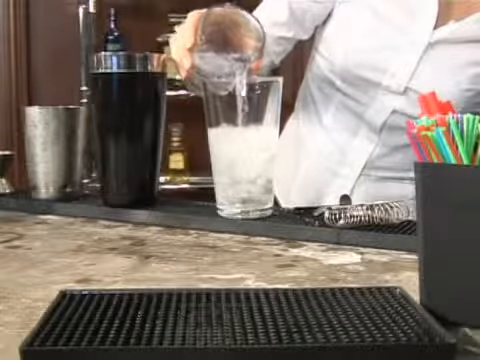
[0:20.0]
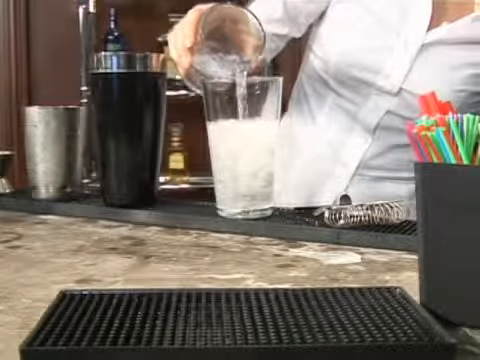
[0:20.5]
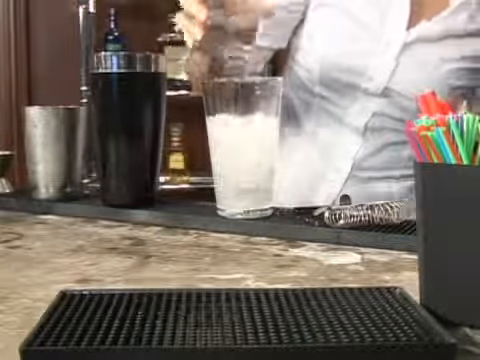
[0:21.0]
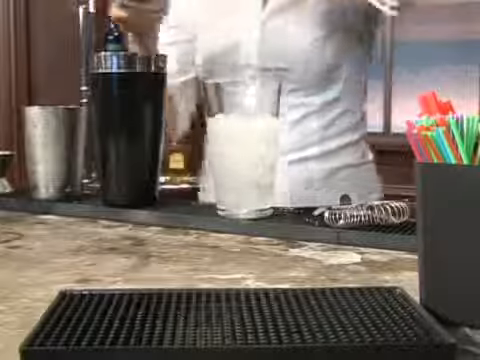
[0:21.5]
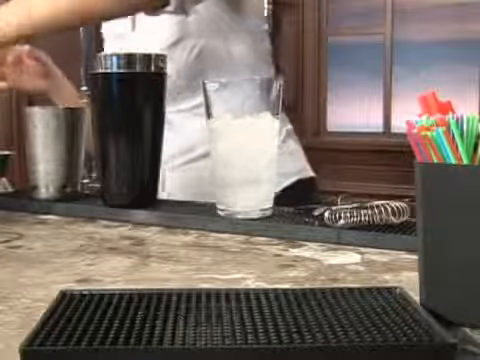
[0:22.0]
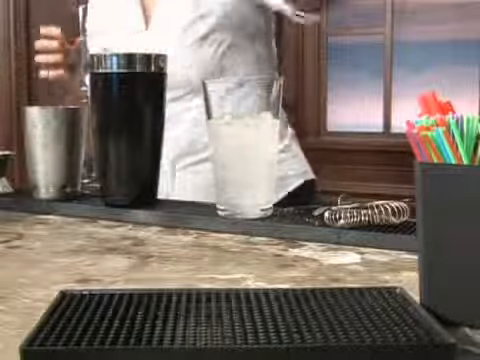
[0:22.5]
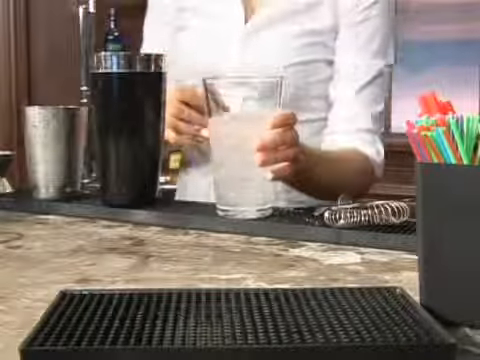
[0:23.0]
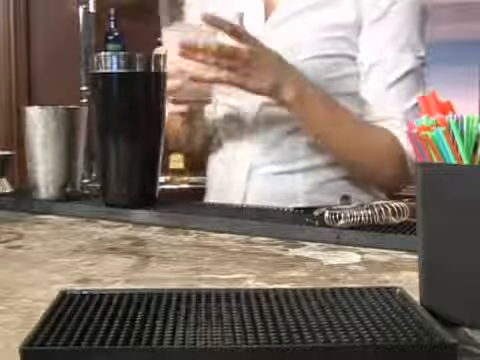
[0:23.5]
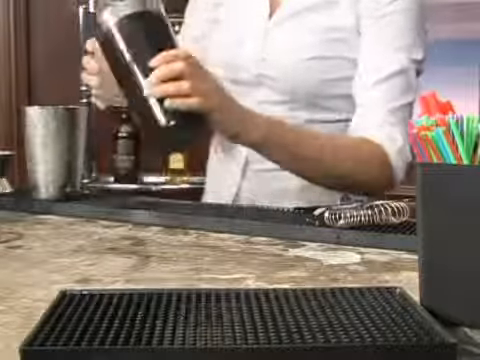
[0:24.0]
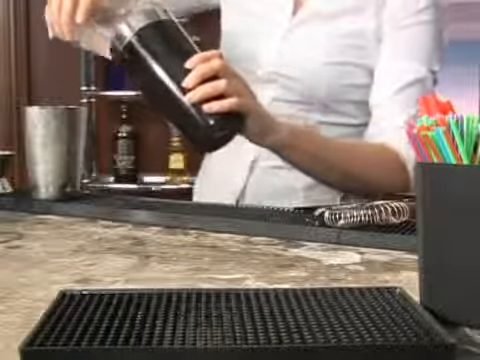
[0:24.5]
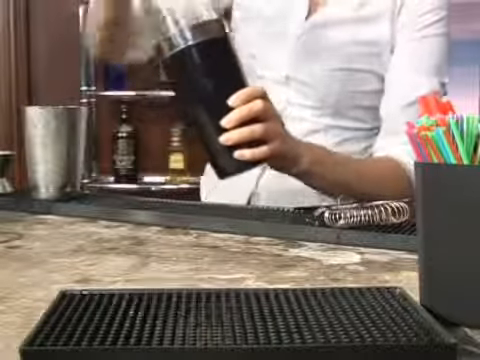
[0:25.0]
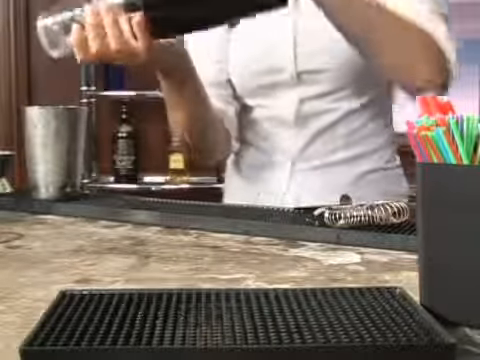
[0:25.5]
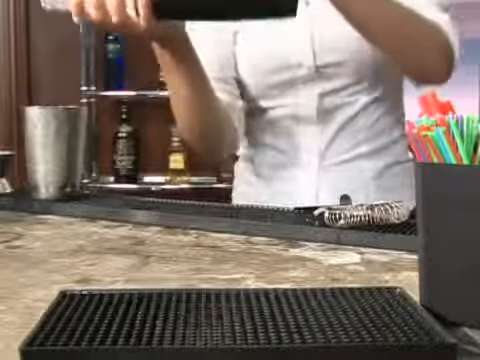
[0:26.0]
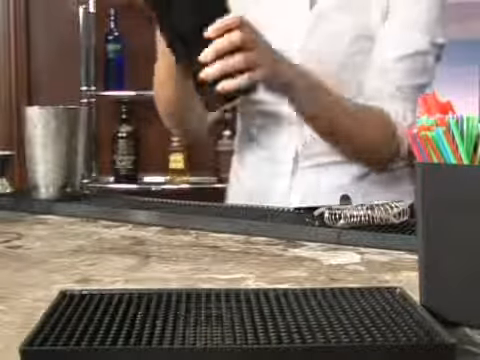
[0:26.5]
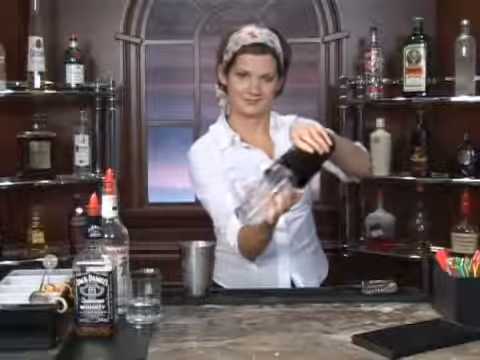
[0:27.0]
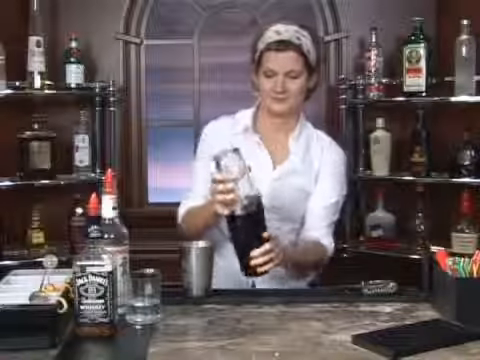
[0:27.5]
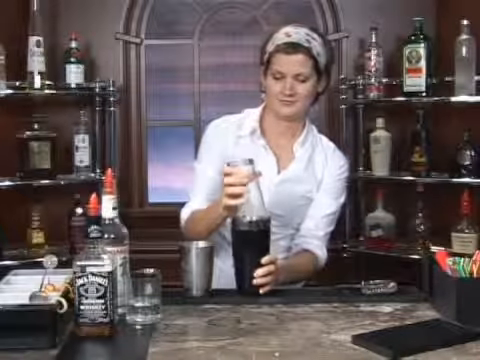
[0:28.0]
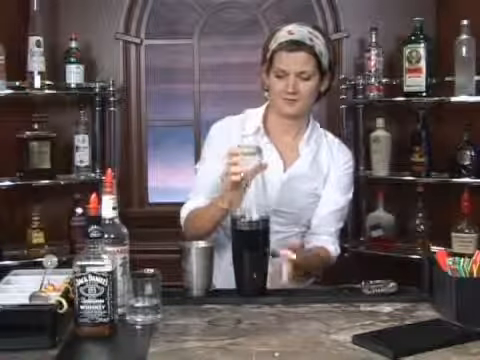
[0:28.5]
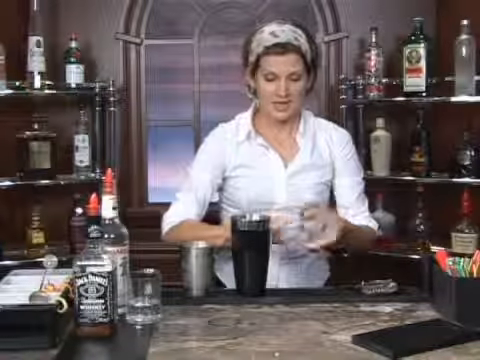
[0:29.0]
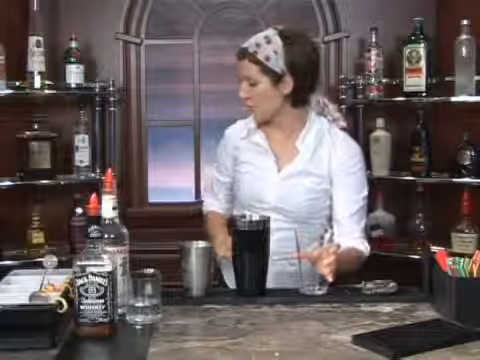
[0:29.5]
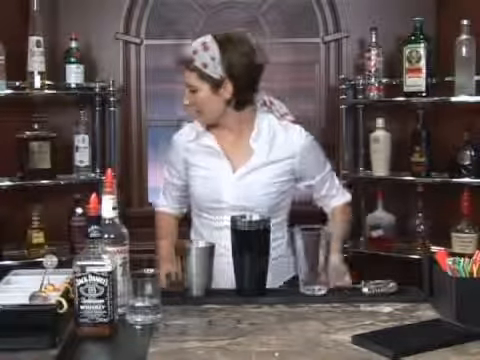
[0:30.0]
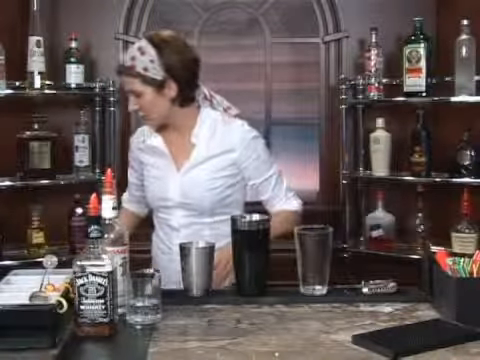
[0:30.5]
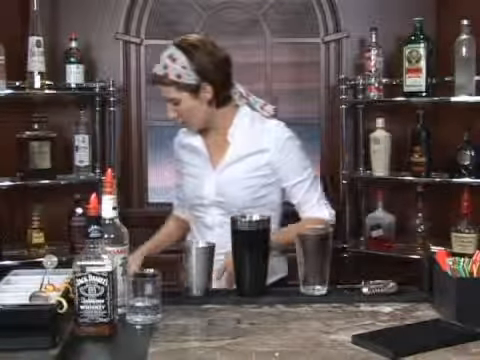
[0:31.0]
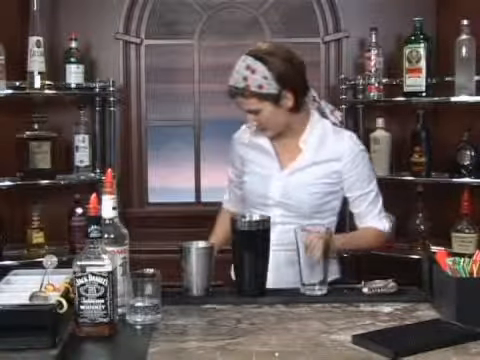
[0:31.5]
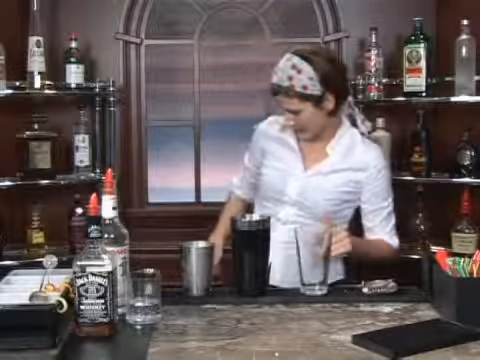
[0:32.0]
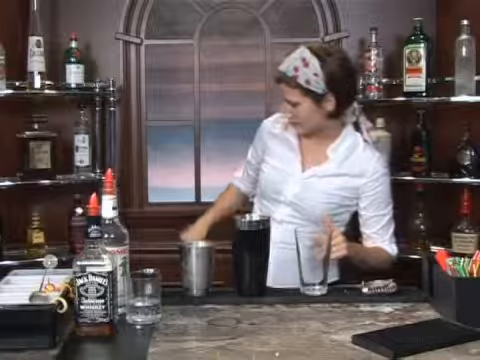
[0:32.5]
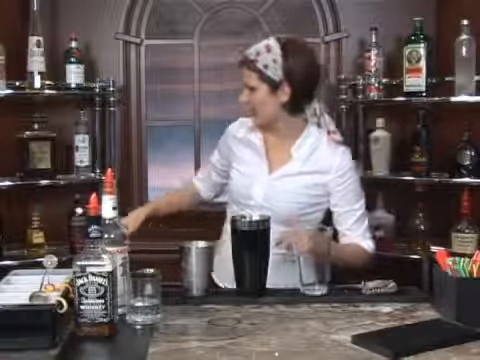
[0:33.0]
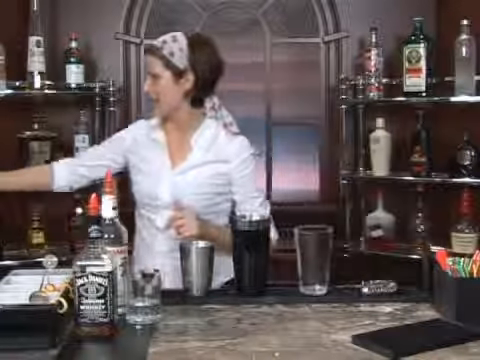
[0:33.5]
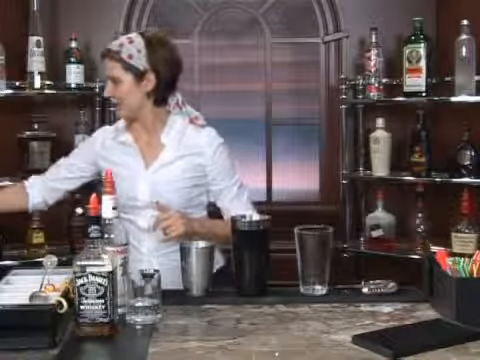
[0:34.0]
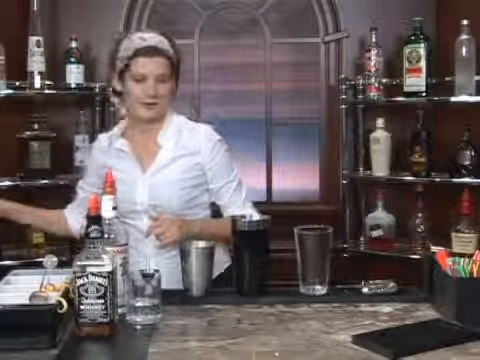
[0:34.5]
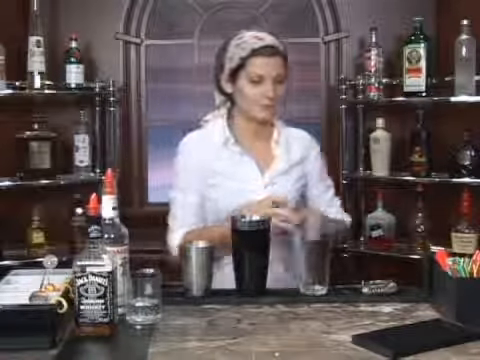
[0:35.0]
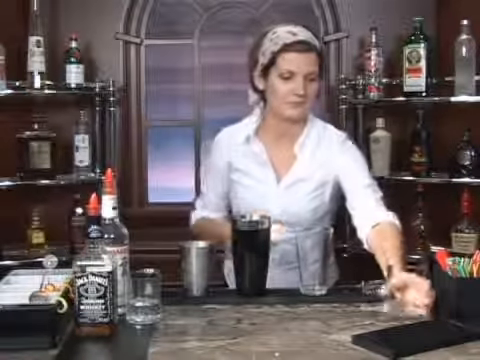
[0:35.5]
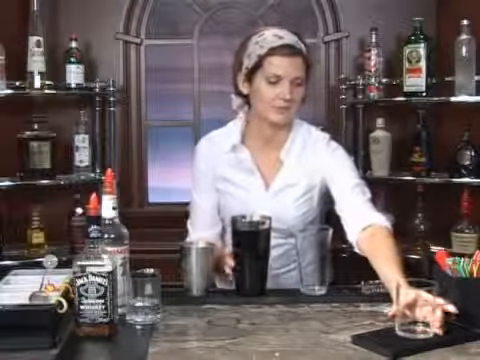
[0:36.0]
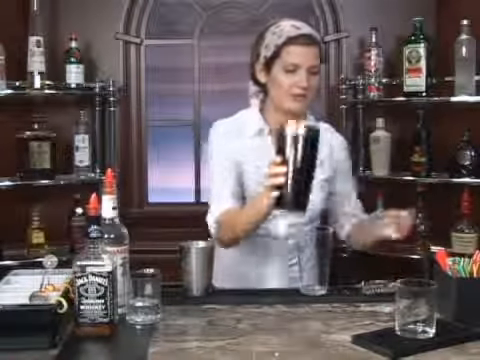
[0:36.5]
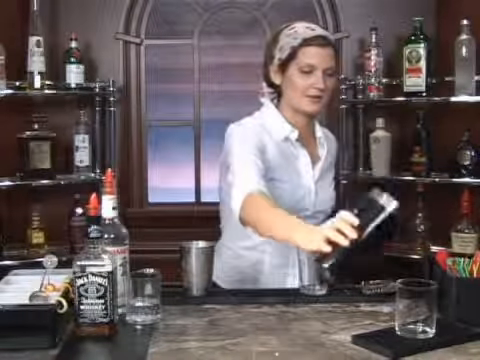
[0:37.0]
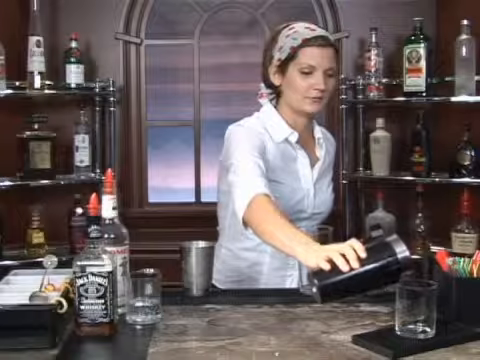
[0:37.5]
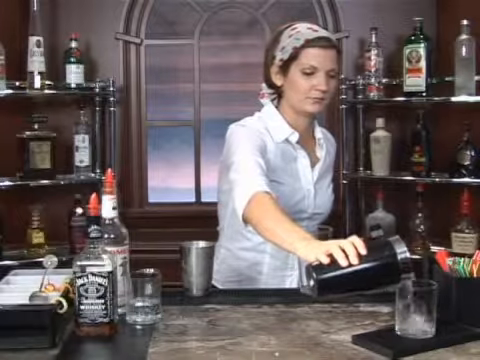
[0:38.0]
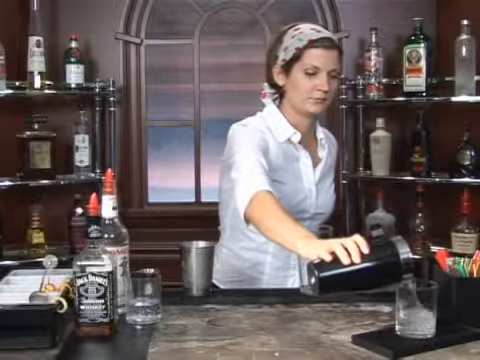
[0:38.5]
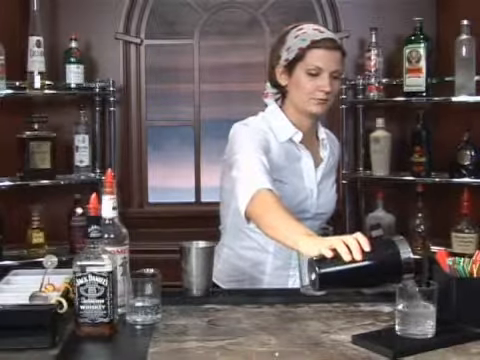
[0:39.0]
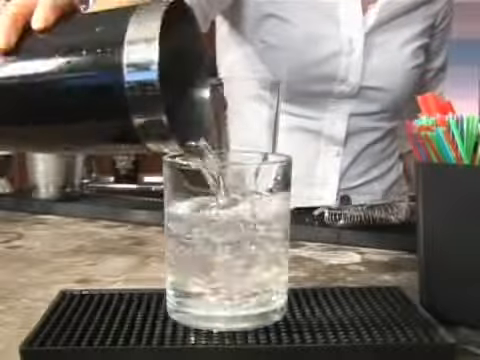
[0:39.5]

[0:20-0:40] After adding the different brands of alcohol and a soda, the woman mixes the glass with an aluminum or plastic cup, shaking them together. She looks for something, then puts the mixture containing ice into another small glass, probably to serve it to a person seated opposite her. She places it on top of a small mat, probably facing a customer. There are straws as well. She is seen shaking the black cup with the transparent glass cup to mix the drink.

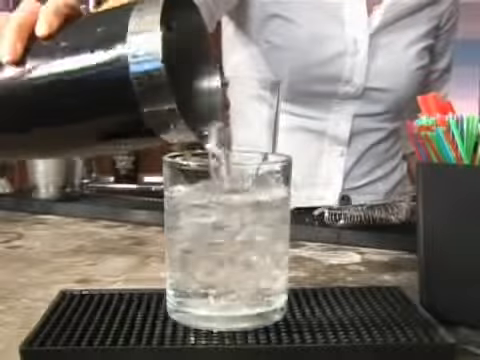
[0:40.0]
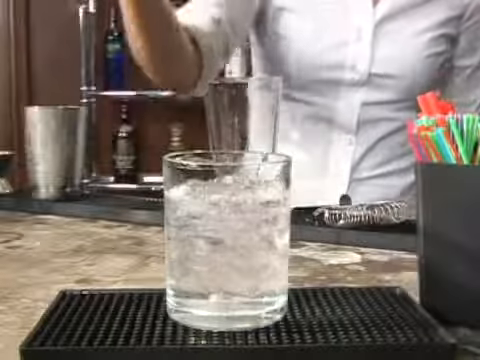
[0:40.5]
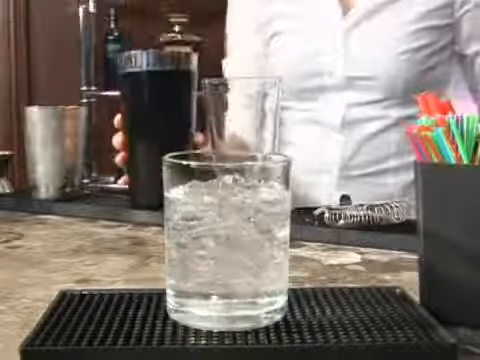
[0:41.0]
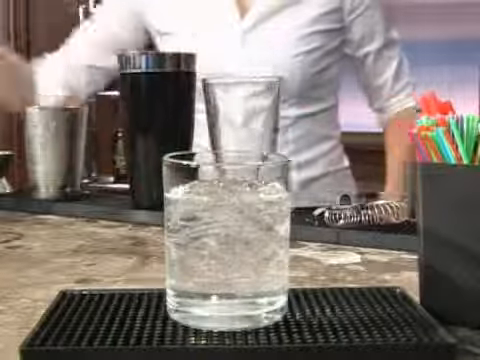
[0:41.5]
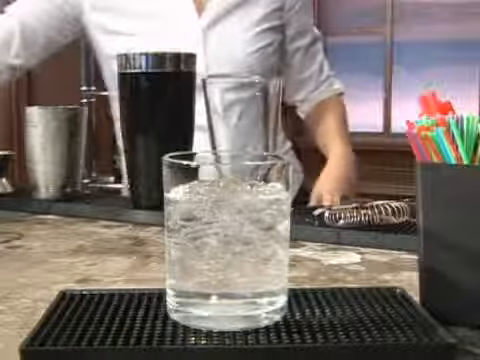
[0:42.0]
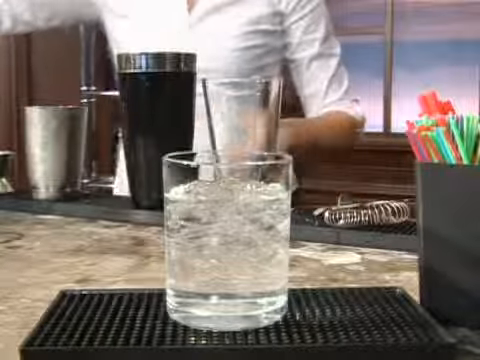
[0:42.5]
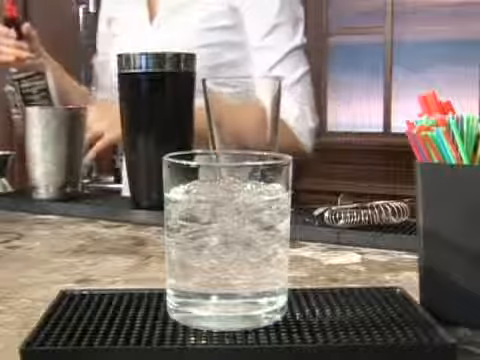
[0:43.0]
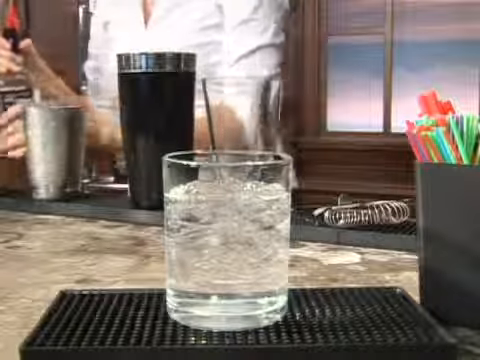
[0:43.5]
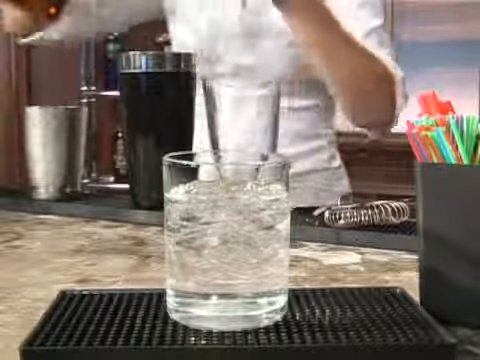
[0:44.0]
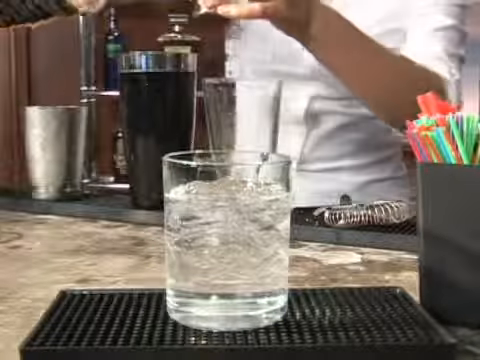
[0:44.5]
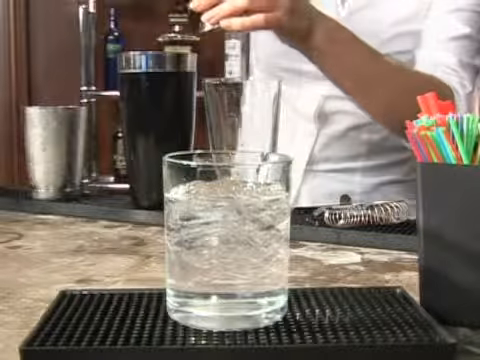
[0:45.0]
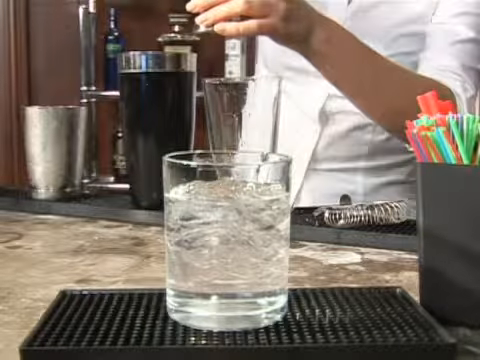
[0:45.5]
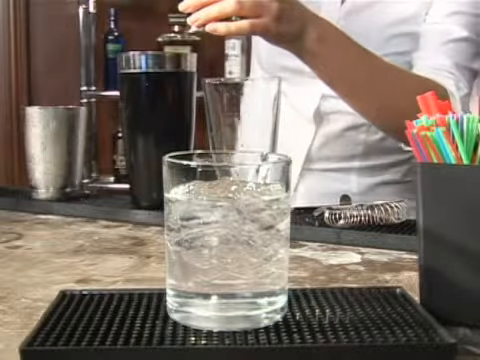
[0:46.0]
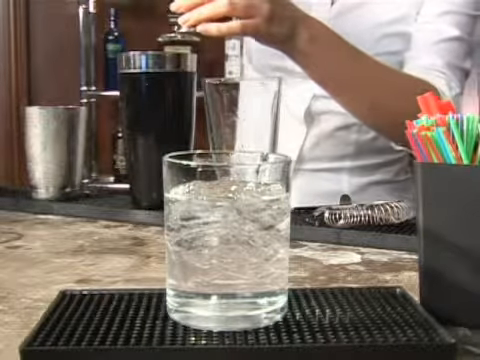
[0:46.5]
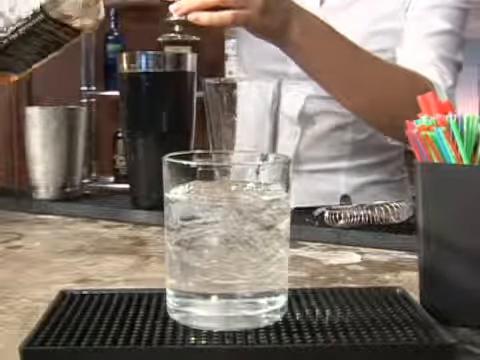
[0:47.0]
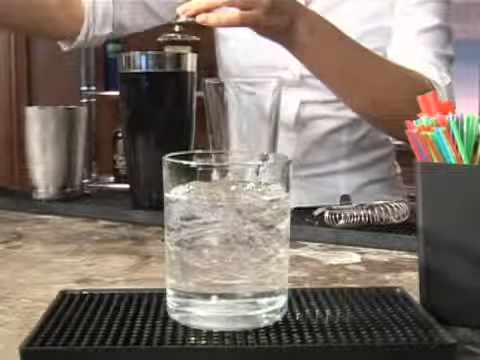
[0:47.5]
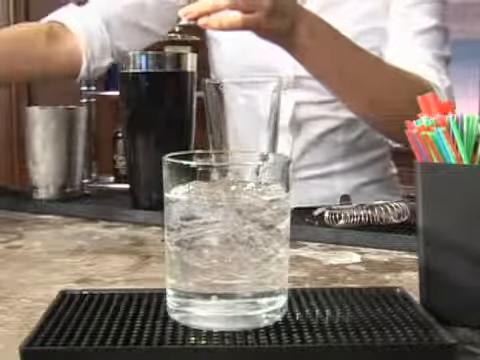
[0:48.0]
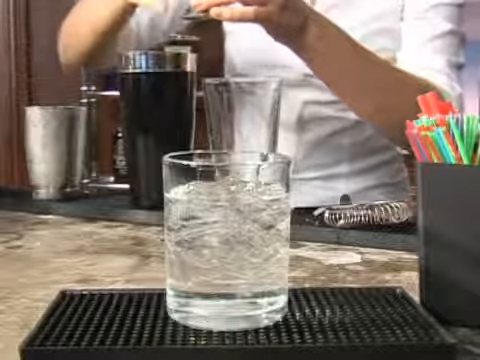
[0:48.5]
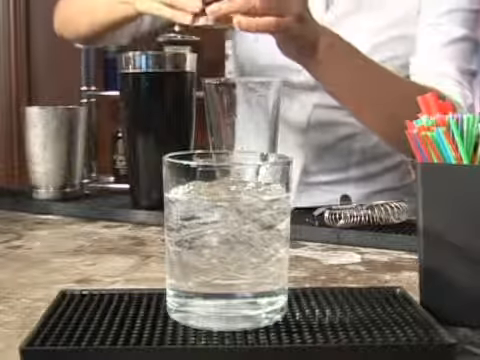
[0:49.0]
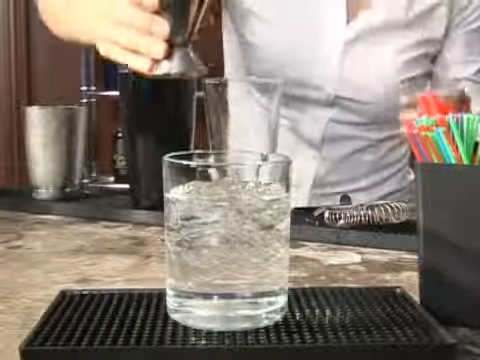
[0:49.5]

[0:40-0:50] The straws are highlighted. The woman pours a shot of Jack Daniel using what looks like a shot glass, adding it into a big glass that contains ice, the soda and the alcohol she put in earlier.